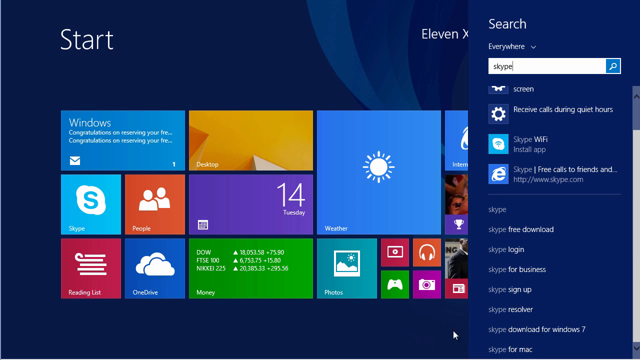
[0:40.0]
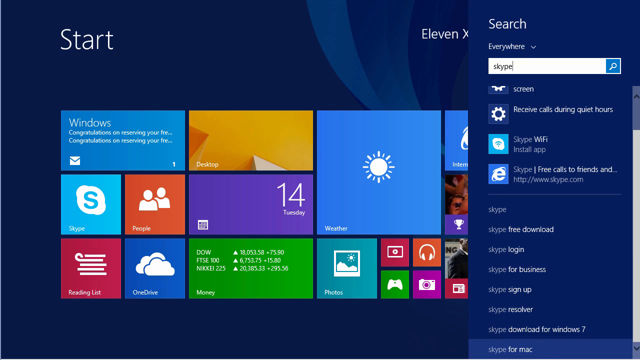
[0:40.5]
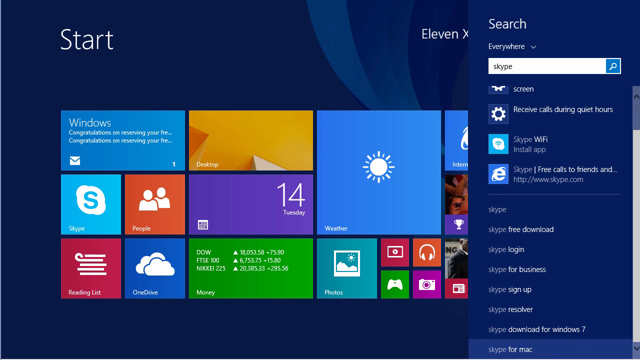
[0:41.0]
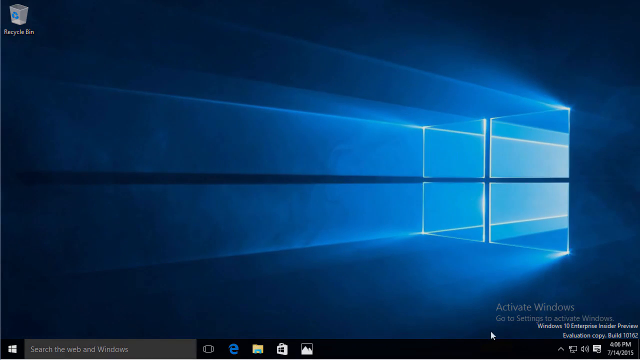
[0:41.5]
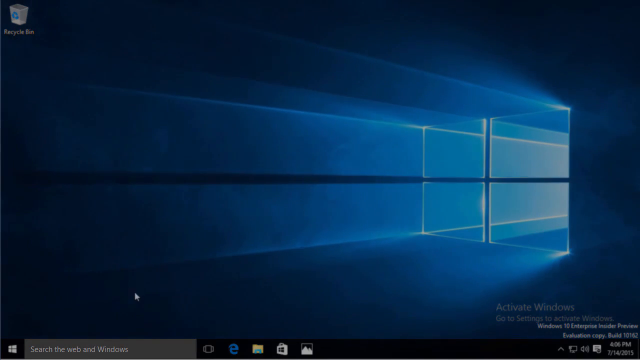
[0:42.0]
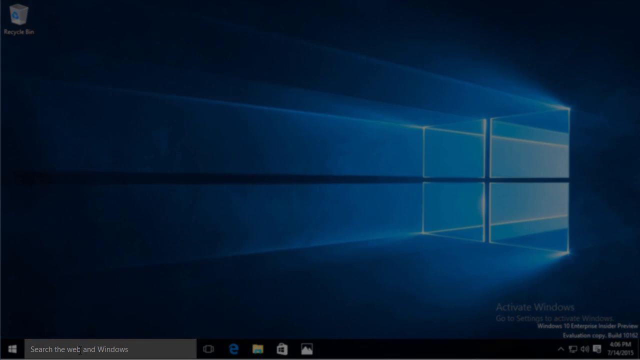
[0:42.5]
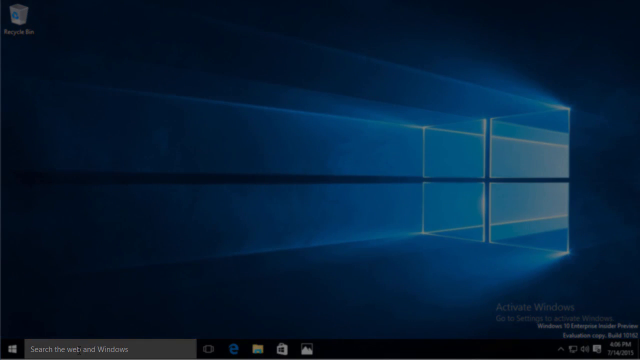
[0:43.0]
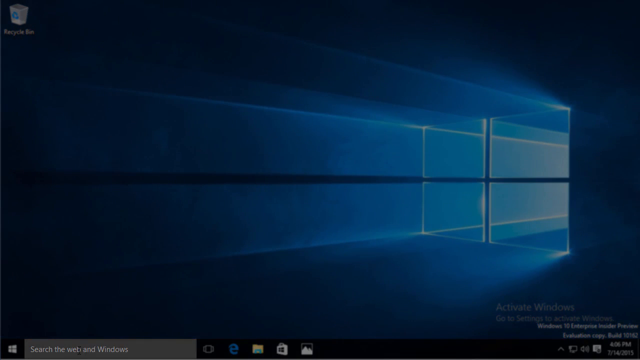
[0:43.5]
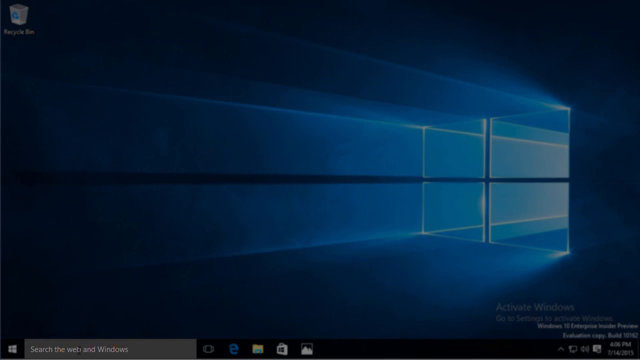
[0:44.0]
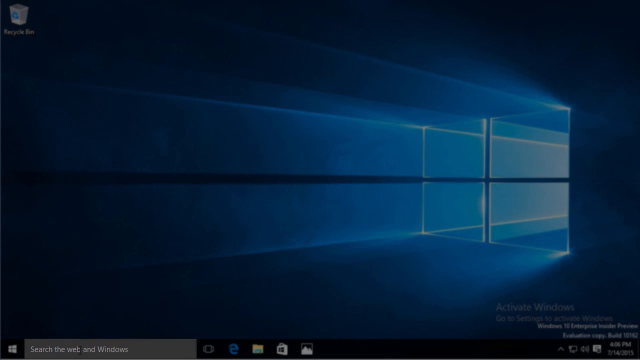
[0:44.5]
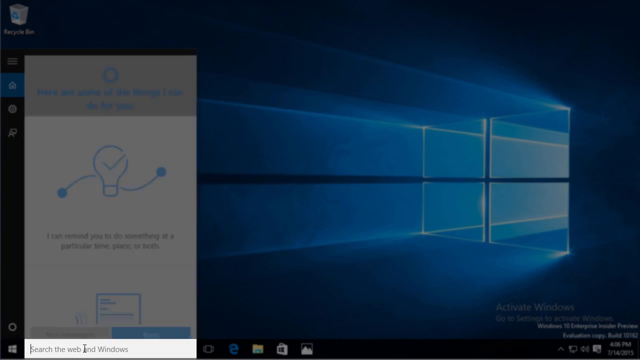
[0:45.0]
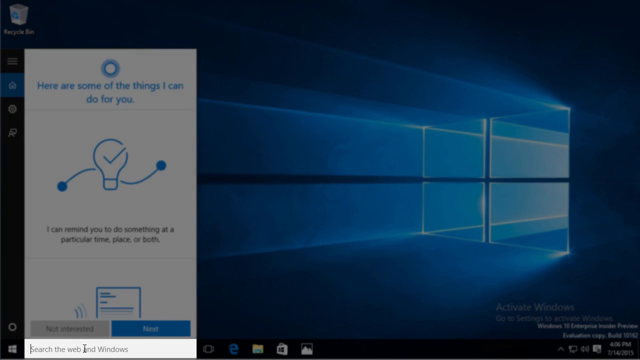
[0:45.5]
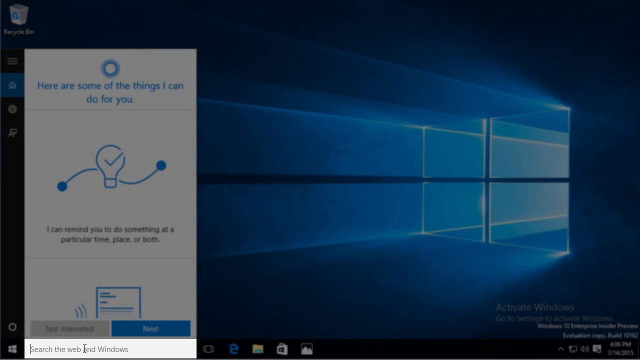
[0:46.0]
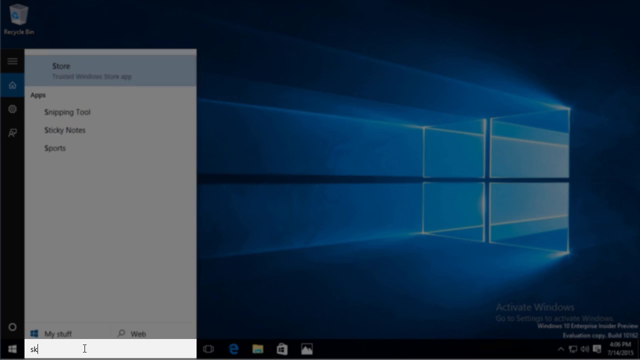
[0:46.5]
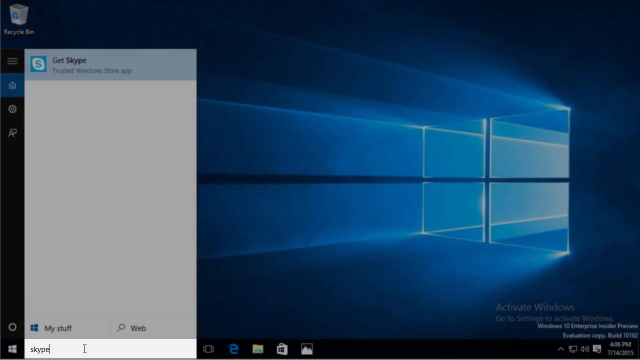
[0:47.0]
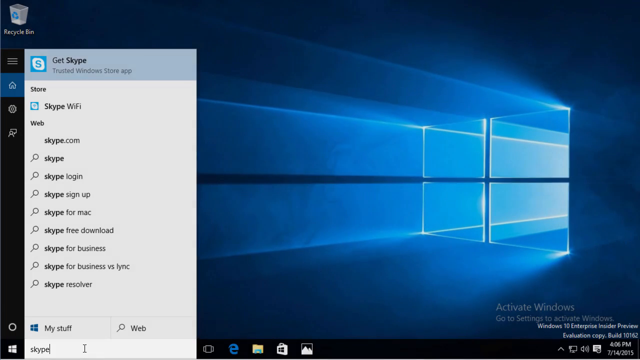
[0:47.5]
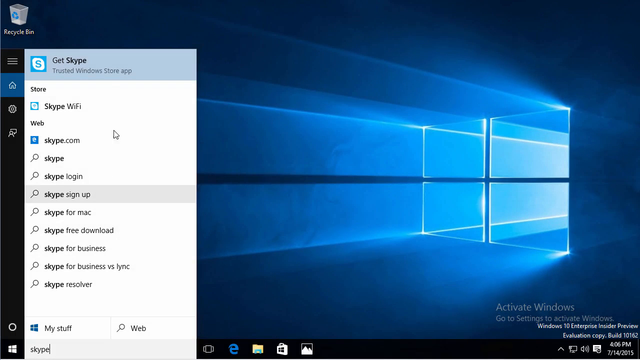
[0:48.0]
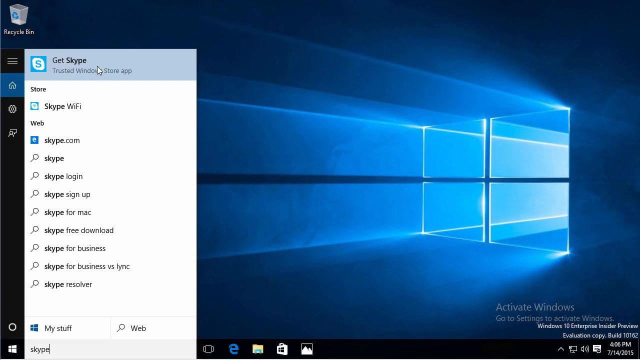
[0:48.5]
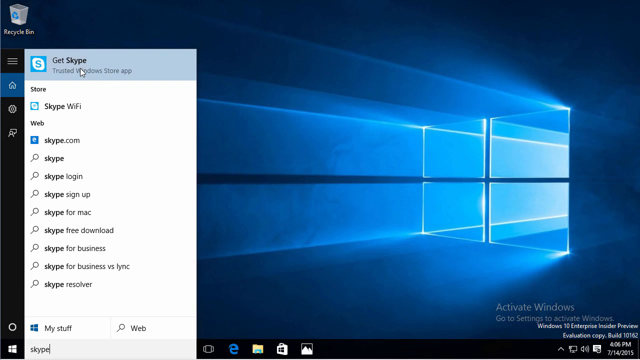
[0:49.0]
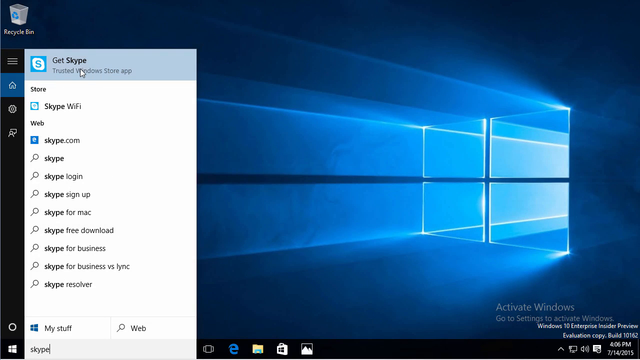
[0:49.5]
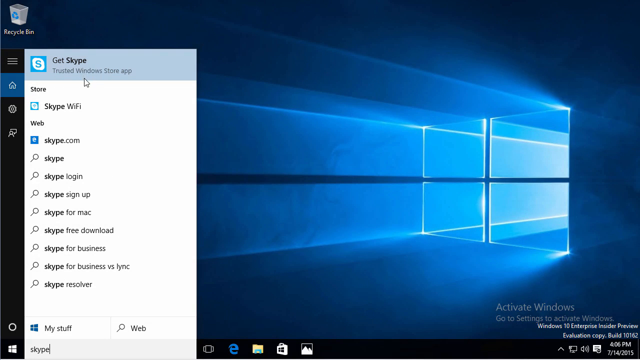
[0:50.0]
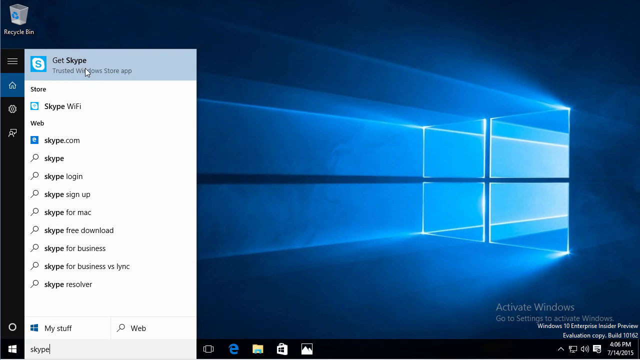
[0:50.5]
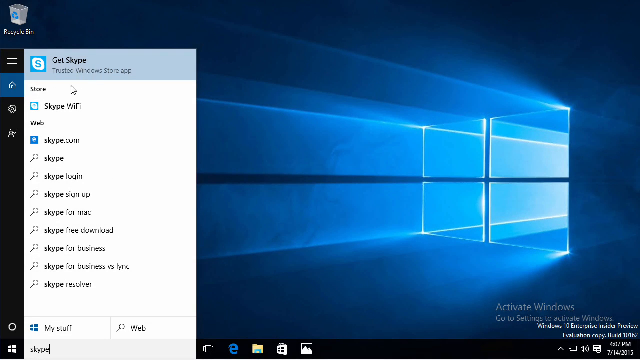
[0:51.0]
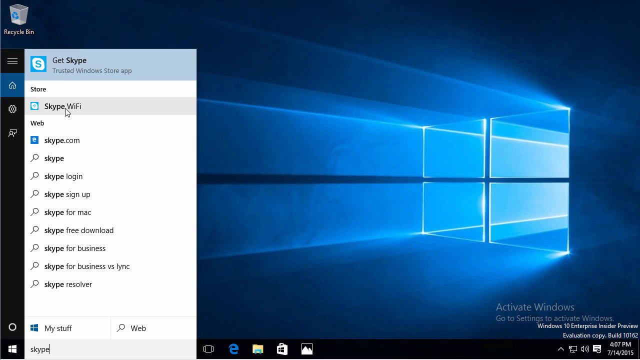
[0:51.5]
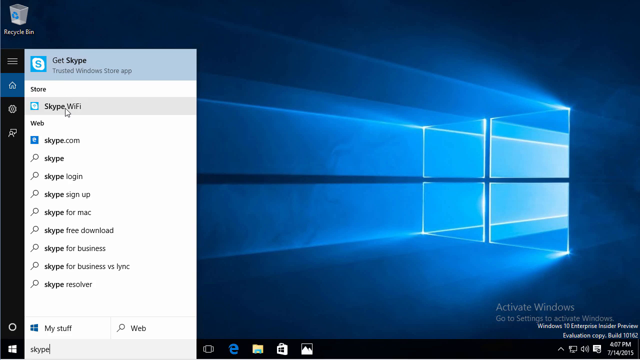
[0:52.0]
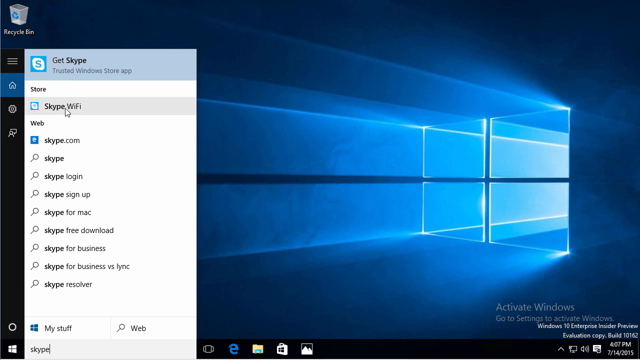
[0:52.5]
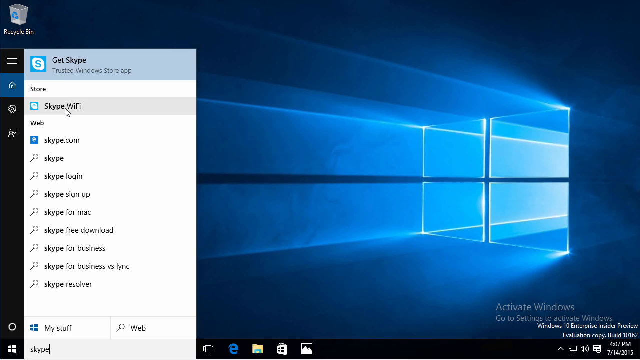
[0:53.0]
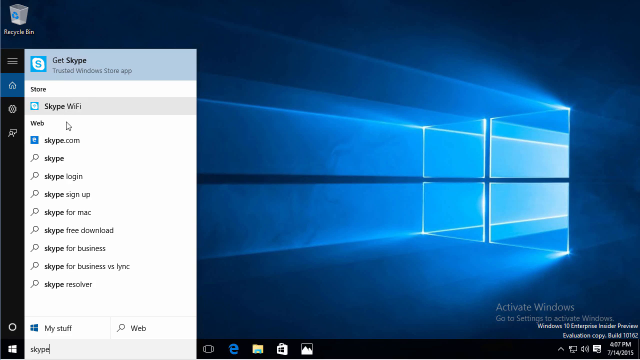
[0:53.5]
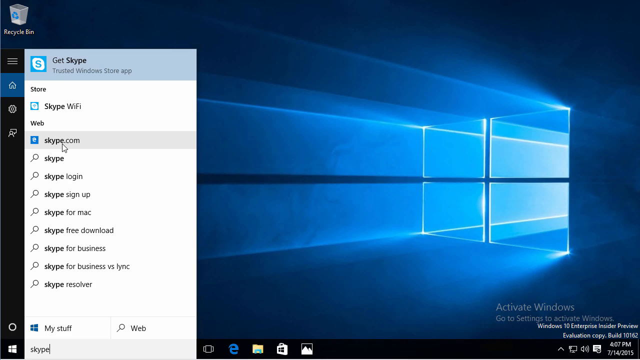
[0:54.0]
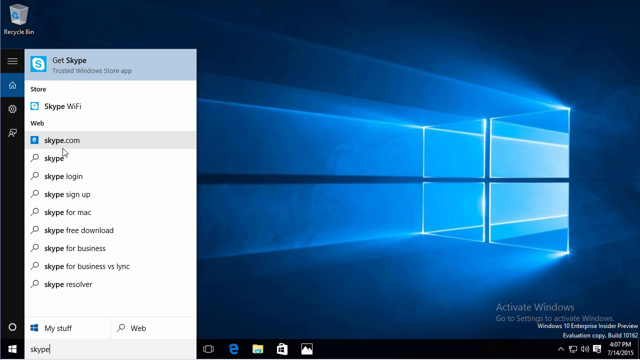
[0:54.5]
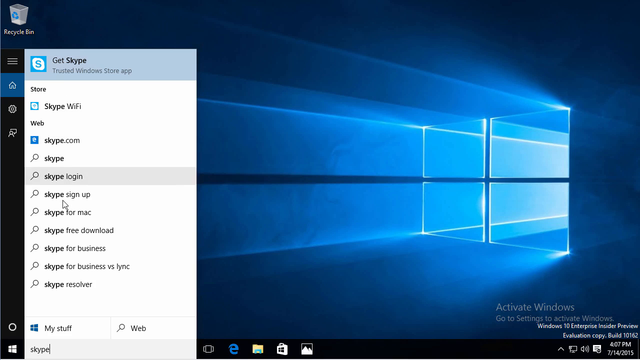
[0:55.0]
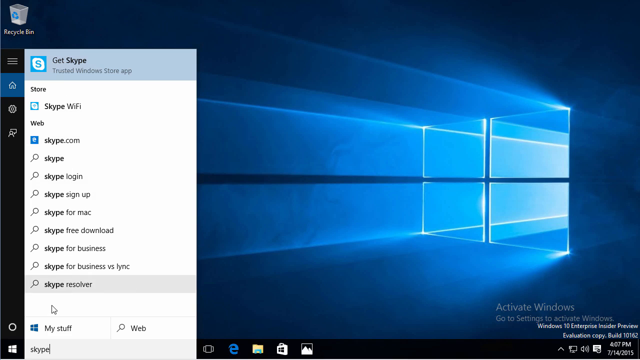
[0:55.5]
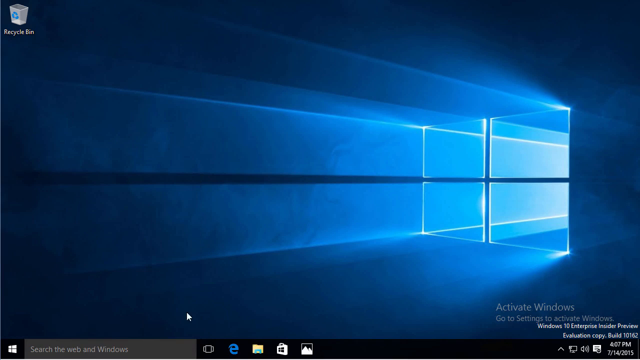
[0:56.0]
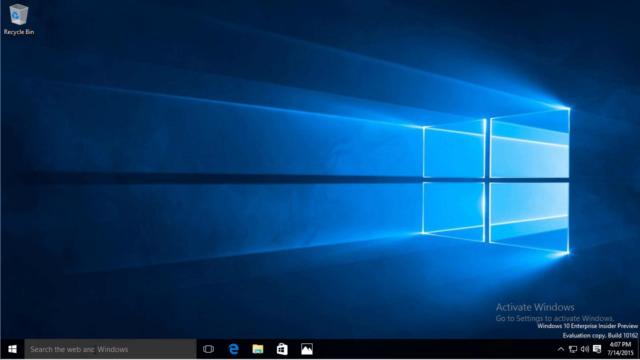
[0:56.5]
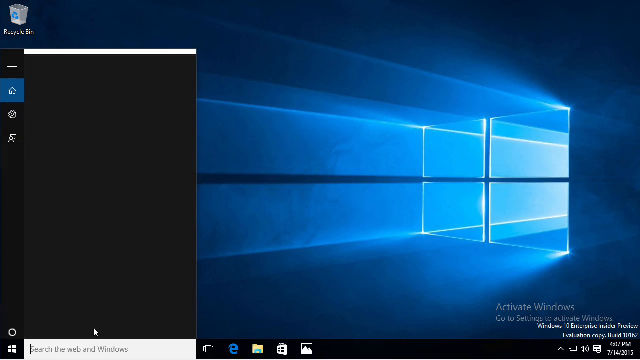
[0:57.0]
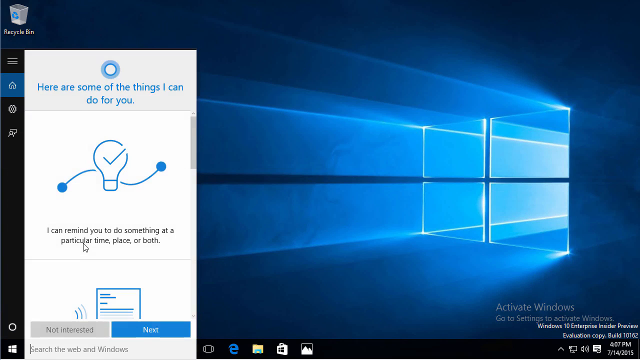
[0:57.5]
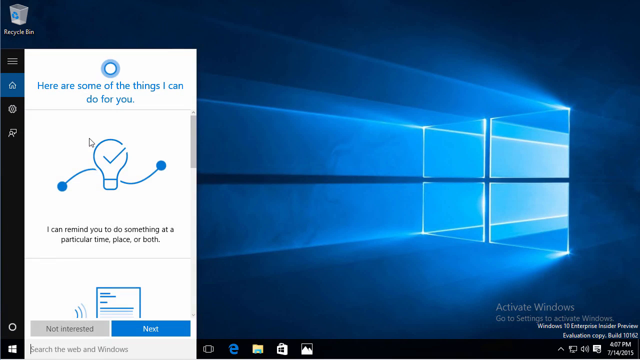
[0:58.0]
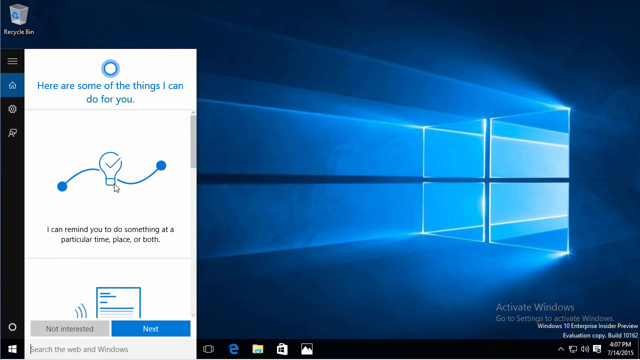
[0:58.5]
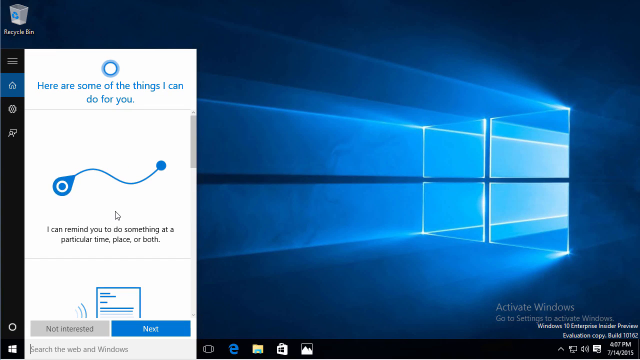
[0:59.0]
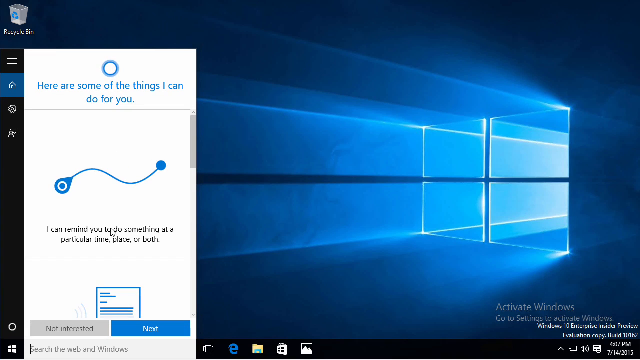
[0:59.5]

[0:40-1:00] The video moves to Windows 10, which has a search box for searching the web and Windows. Skype is typed into it, and a list of results appears: Store with Skype Wi-Fi, Skype.com linking to the website, Skype login, Skype sign up, Skype for Mac, Skype for Windows, Skype free download, Skype for personal use, Skype for business use, and a link to Skype Resolver.